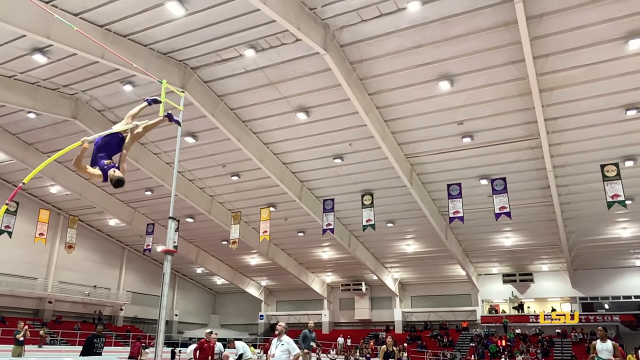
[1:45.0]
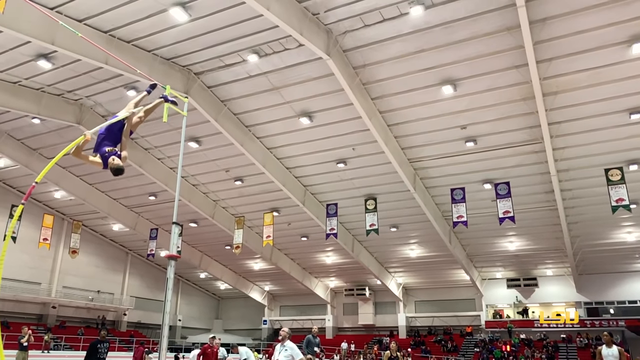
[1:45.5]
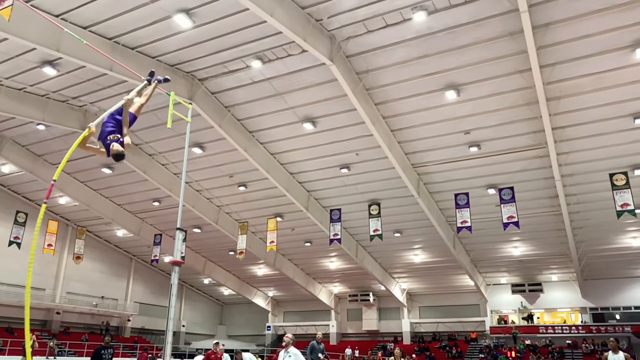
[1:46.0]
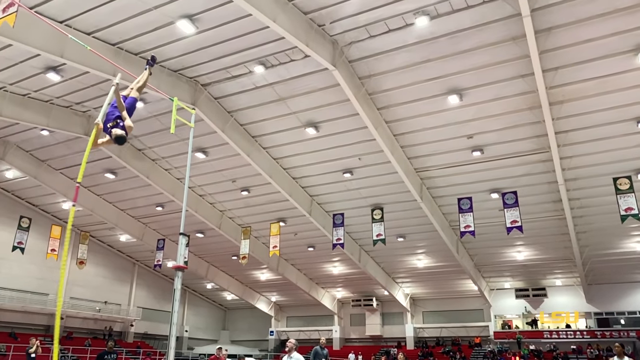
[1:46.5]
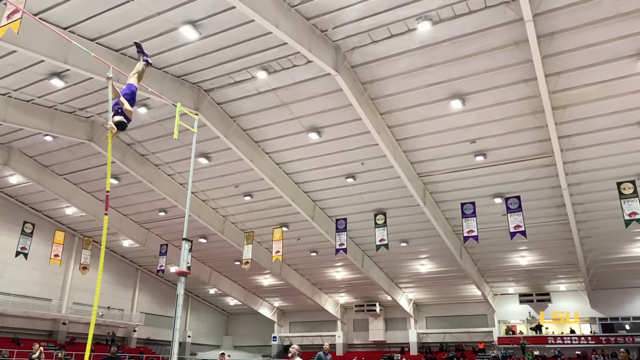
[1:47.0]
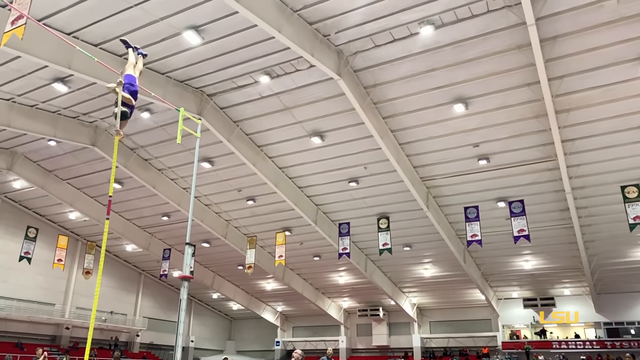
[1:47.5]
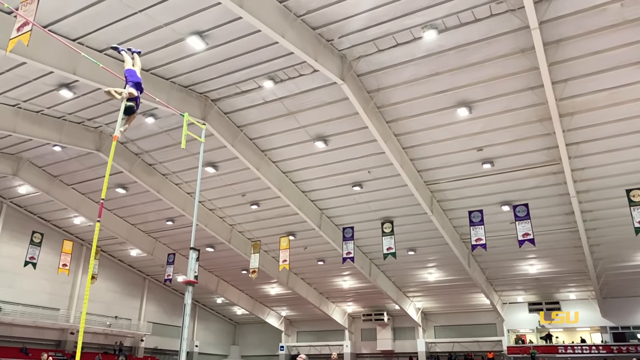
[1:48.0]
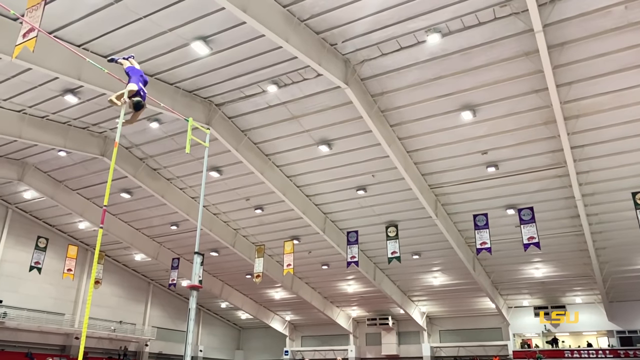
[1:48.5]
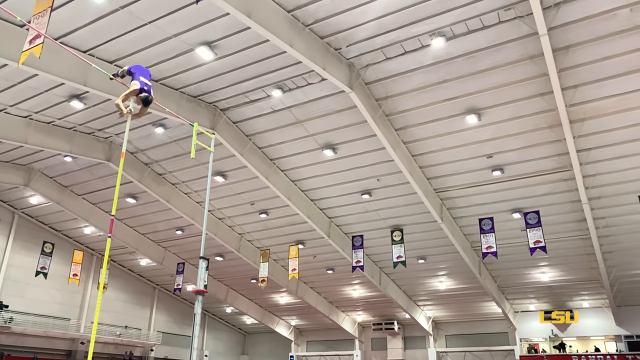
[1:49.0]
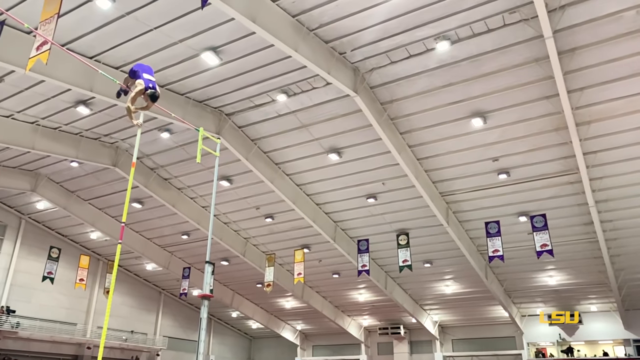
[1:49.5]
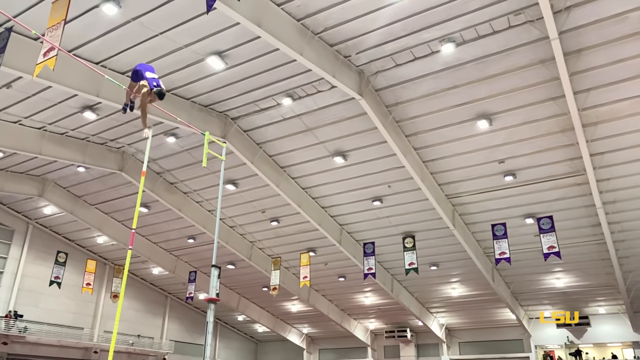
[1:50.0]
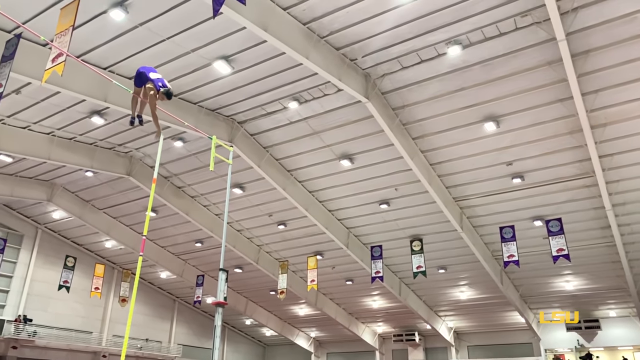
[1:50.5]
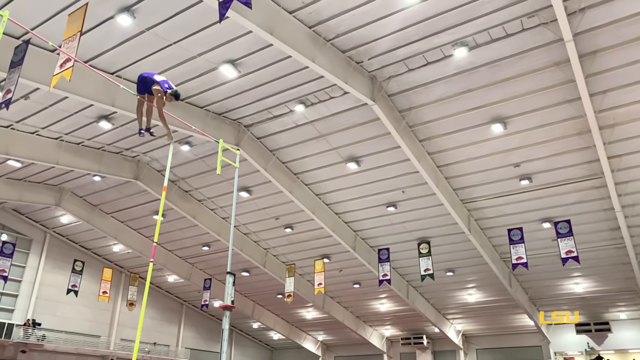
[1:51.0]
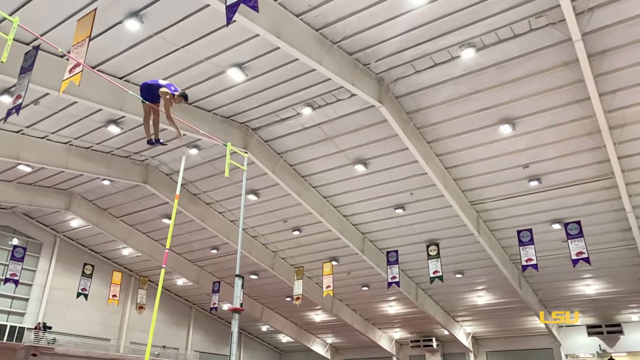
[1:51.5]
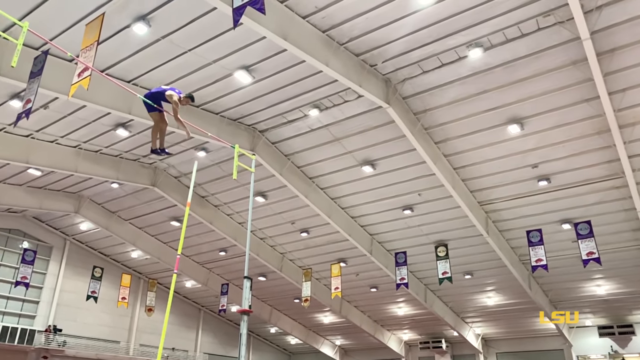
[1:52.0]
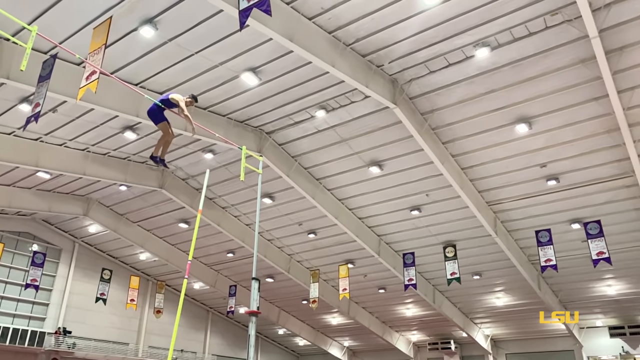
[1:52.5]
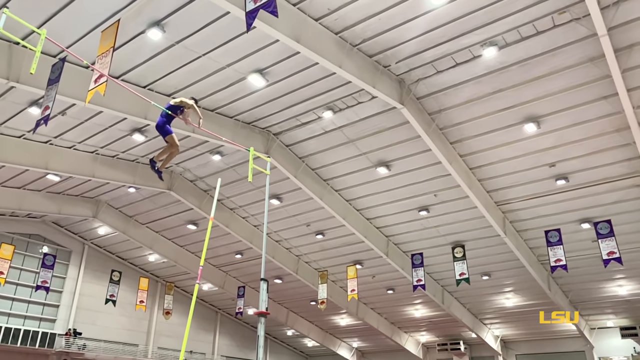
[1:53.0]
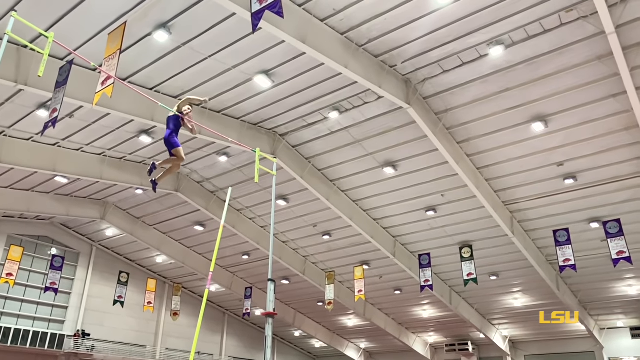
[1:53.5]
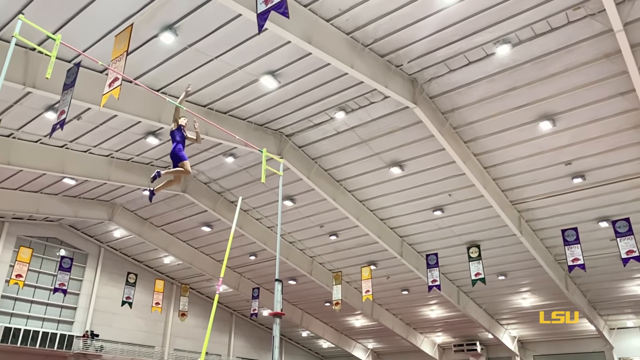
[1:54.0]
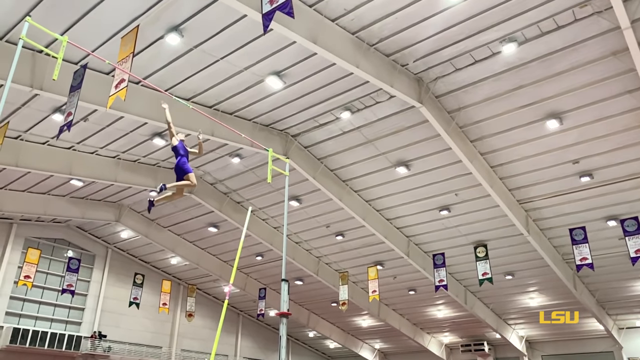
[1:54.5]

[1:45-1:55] He hops over the record height once again, touching the pole multiple times: once with his feet, once with his chest and once with his arms. The competition is probably in a gym with all the needed equipment. Various banners hang at the top, probably for all the times the university has won the competition. The gym is brightly lit, with all the lights on. At the very end, more advanced math appears, with "Mondo Duplantis," "sprint speed," "height," "weight," "record height" and "men's pole vault world record," along with other math such as "KE = PE" and "CM begins at 1 meter above ground."